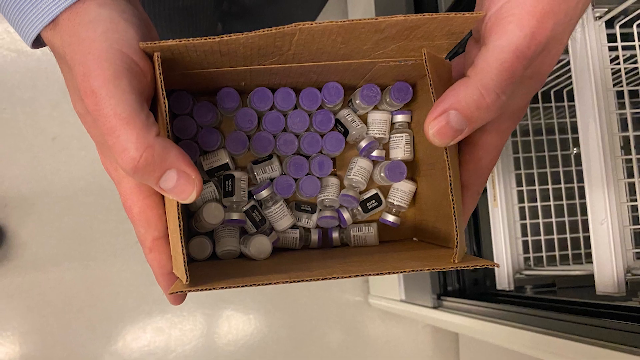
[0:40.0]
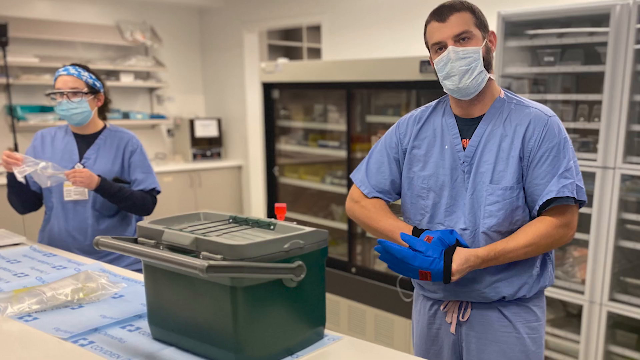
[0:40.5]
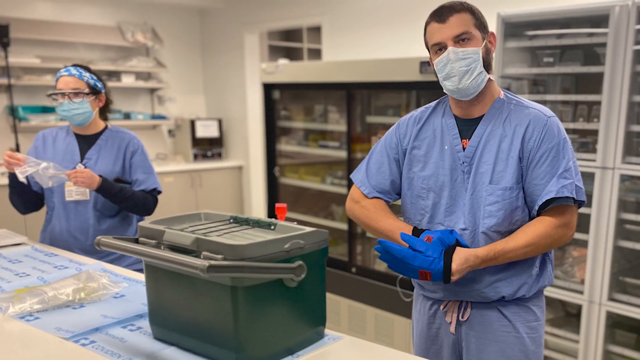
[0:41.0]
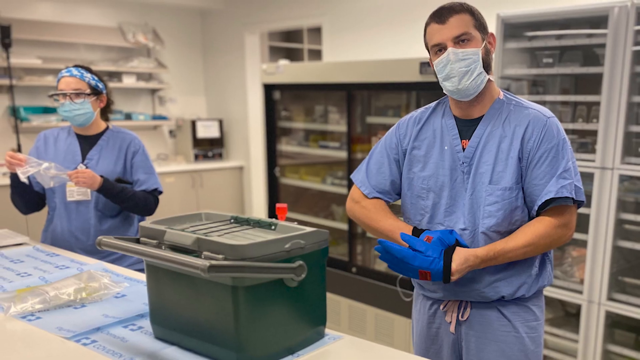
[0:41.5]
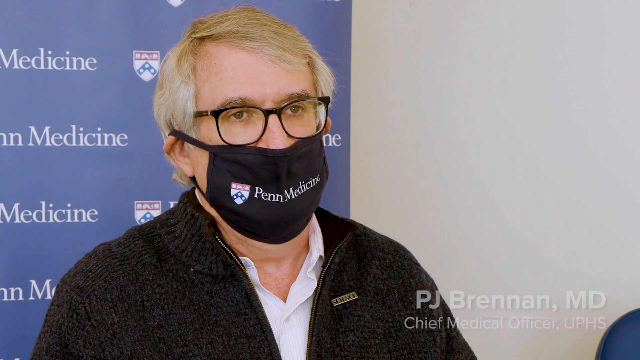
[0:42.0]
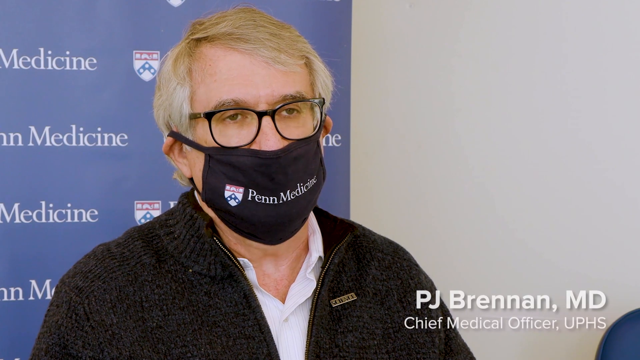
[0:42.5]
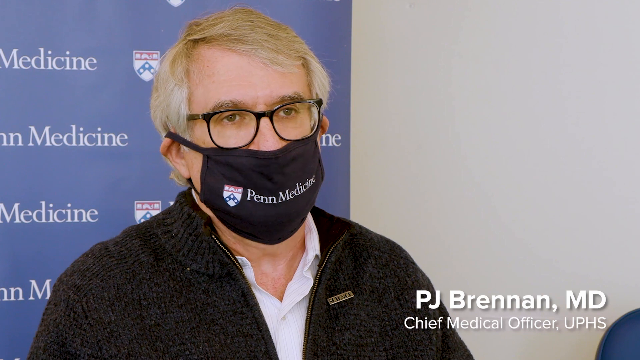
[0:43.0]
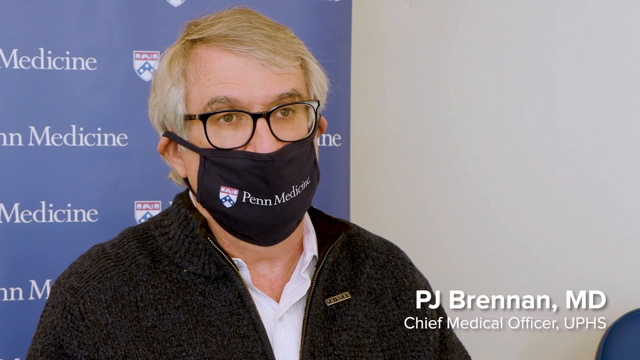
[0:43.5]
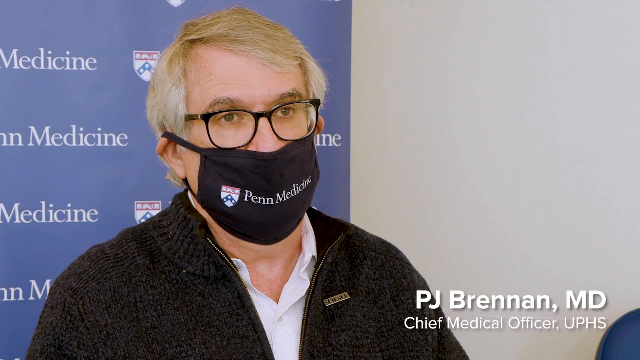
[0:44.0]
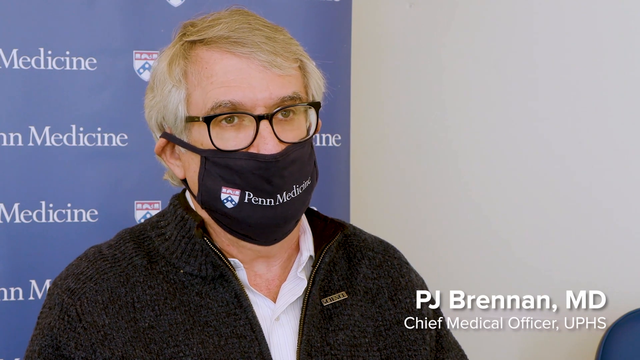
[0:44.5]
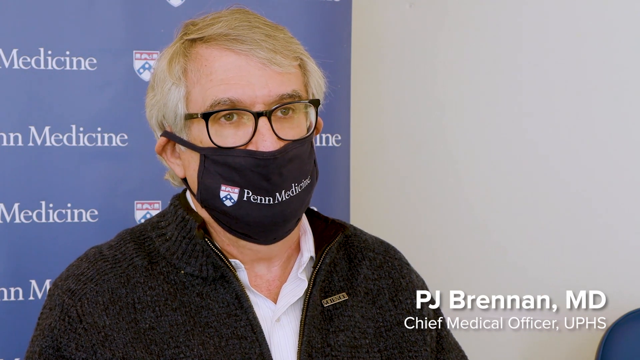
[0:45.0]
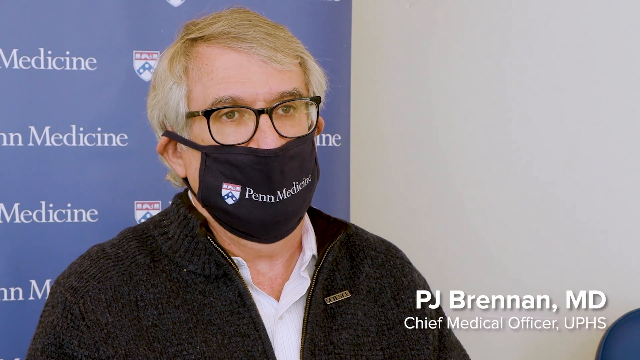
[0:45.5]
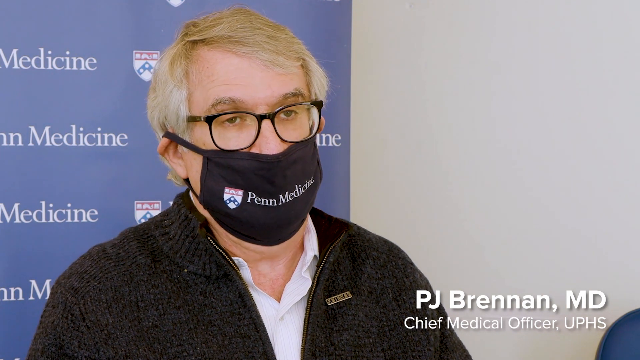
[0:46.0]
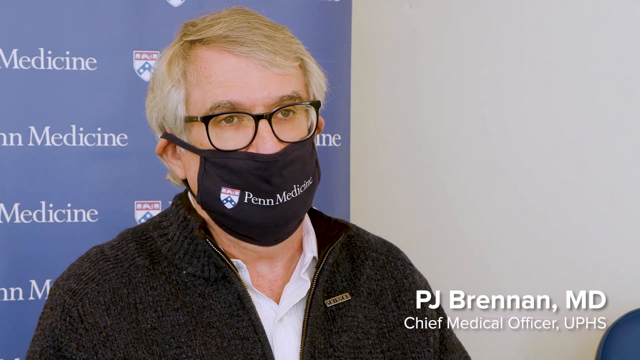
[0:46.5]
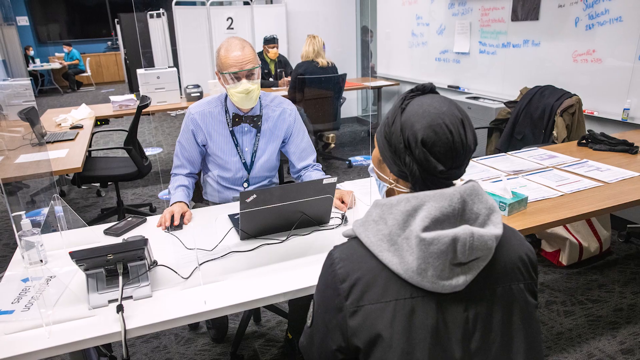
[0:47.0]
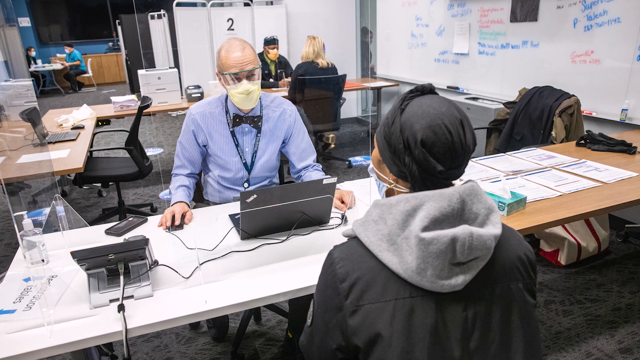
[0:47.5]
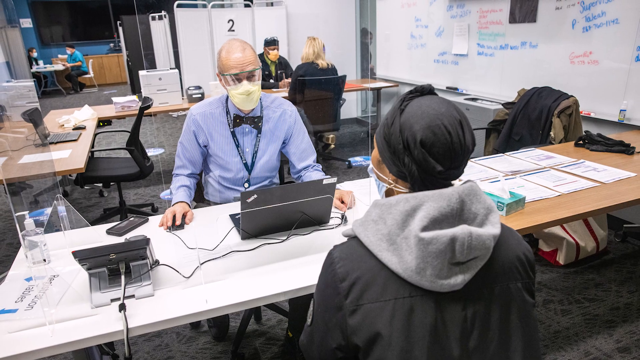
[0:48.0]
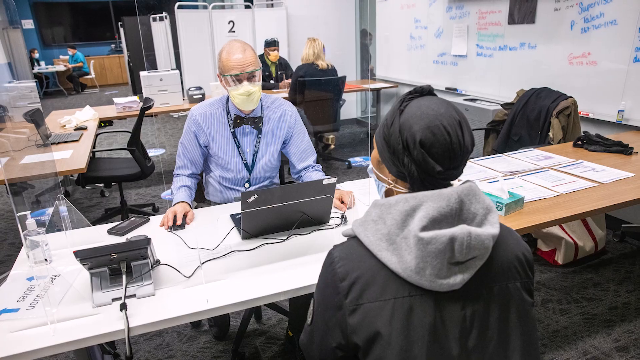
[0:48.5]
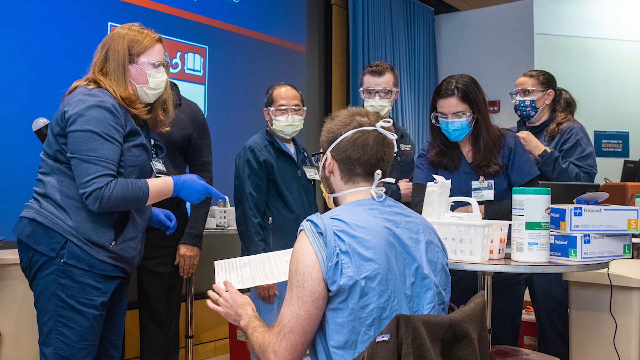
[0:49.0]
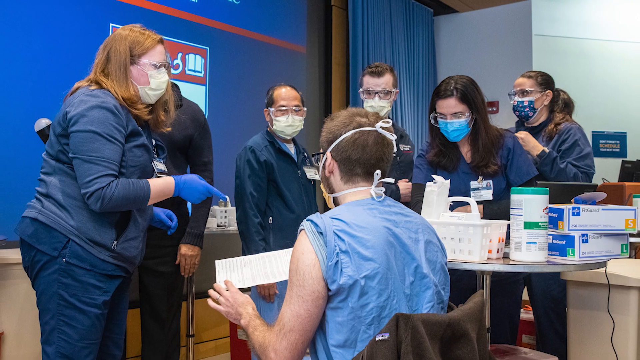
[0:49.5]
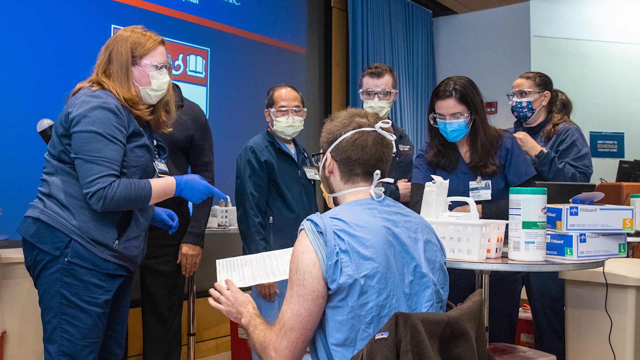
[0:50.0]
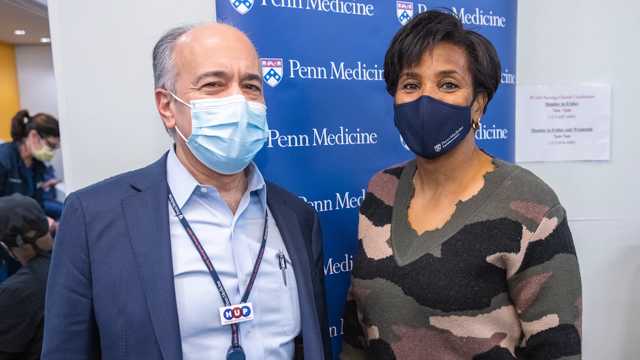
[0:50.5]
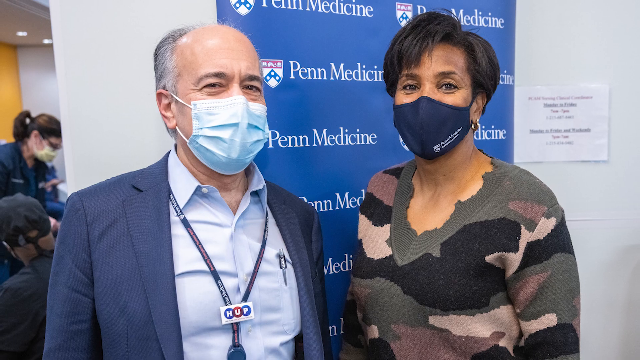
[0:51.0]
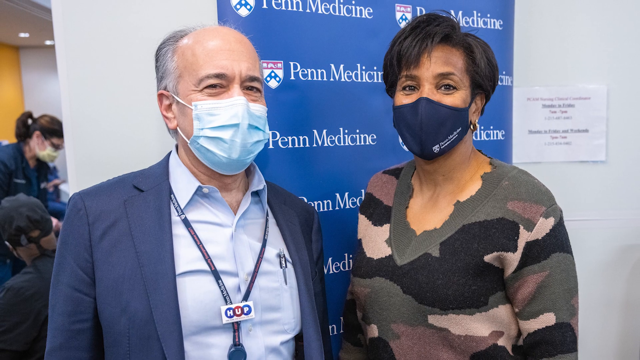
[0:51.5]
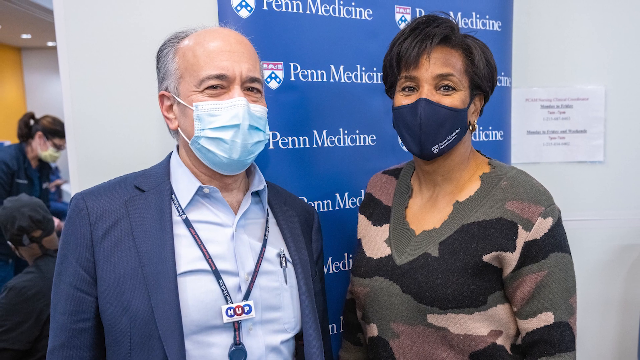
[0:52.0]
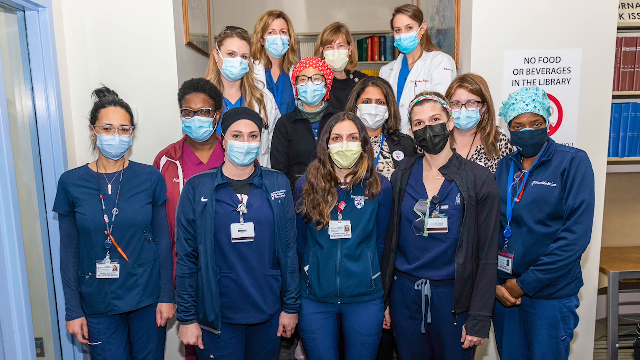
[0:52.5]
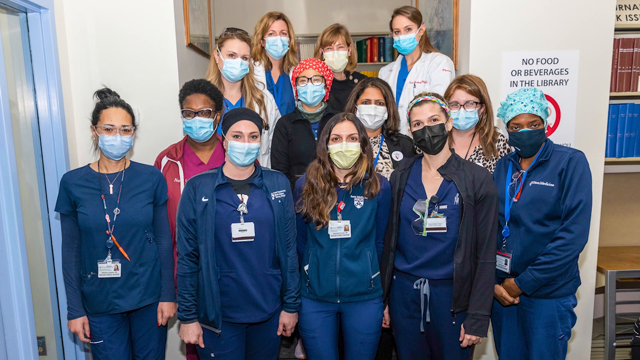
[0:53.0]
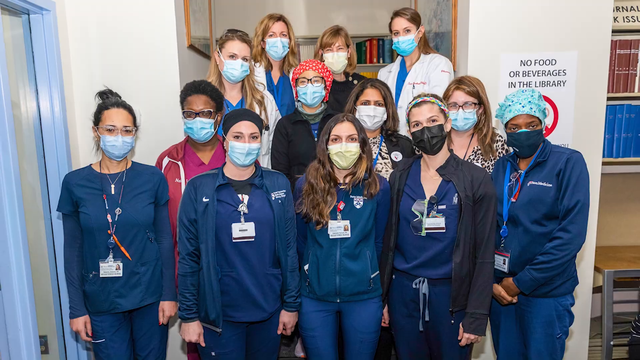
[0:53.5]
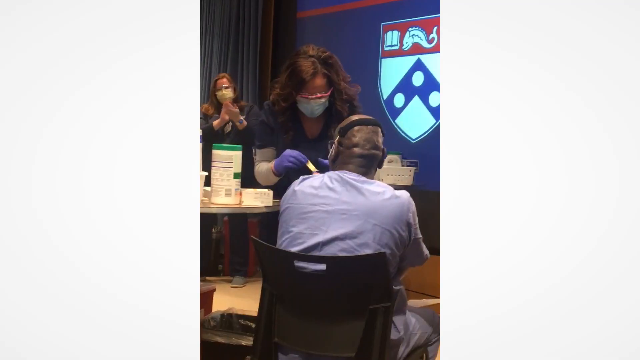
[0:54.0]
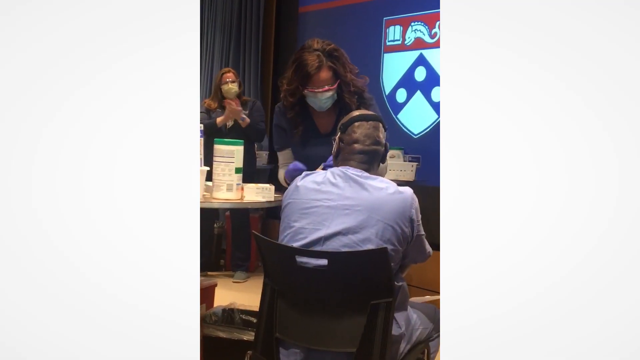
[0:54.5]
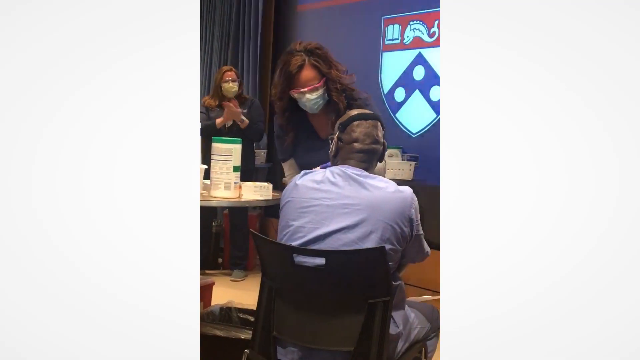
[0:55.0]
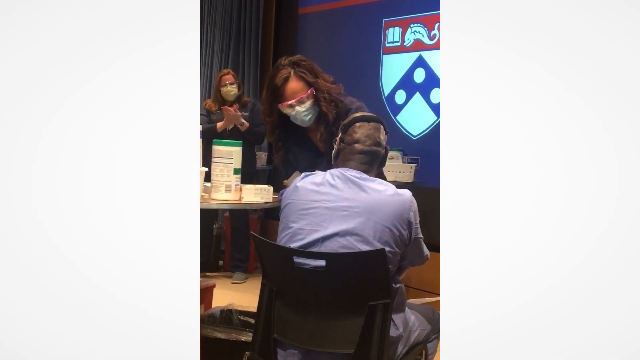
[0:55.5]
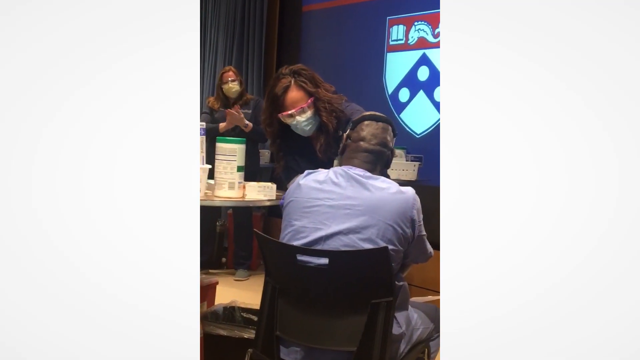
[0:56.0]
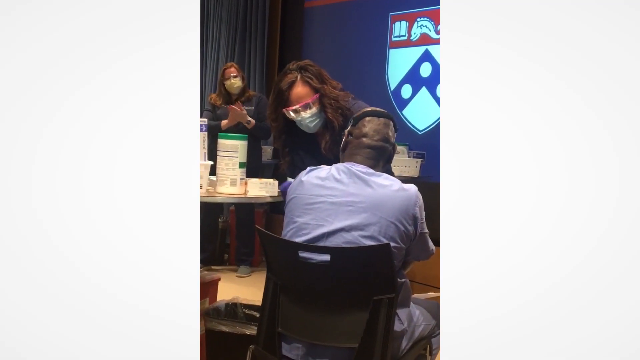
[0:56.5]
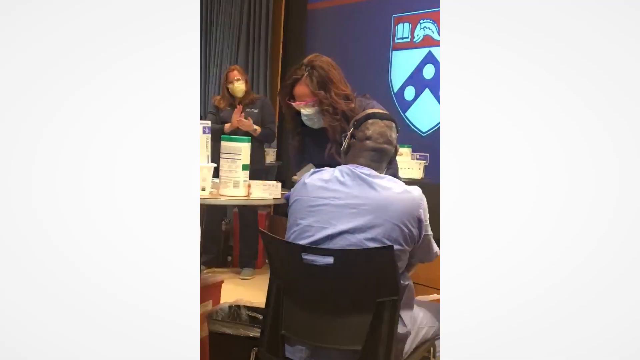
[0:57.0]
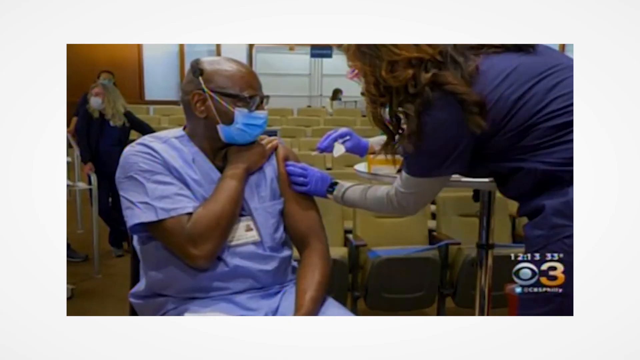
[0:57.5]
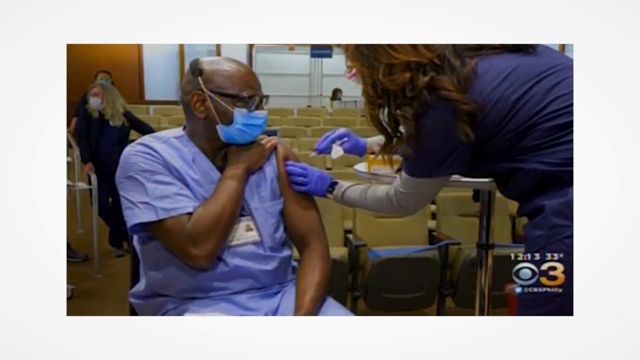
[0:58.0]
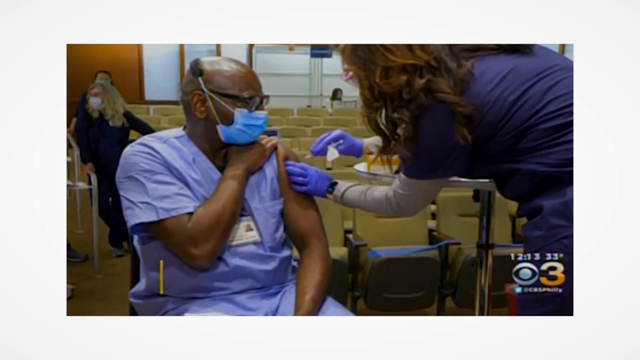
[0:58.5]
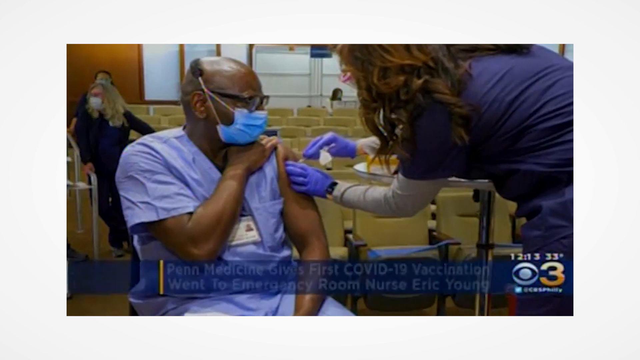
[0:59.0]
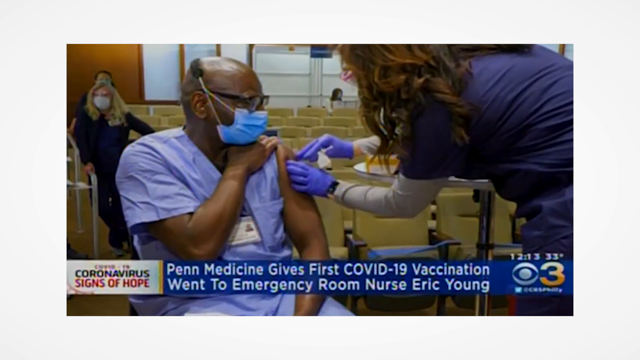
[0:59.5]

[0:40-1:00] A close-up shows a box holding about 100 vials of vaccine, held on either side by a man, with the top open and the camera looking down at the vials from above. The scene cuts to a still image of what appears to be a lab, where two technicians in blue overalls seem to be holding court. Next is PJ Brennan, MD, being interviewed in a head-and-shoulders shot. He has whitish-blondish hair, wears dark glasses and a Penn Medicine mask, and stands in front of a Penn Medicine board. Several still photographs of people being vaccinated follow: a patient sits while a series of workers scurry around administering his vaccine. Three or four such pictures flash on screen very quickly. The video returns to moving footage of another vaccination at Penn Hospital, with the same brand emblem visible just behind the woman giving the injection. A man sits in a chair with only his back visible. The woman leans forward in the classic injection posture, puts the needle into his arm, pulls it out, and swabs the spot with a wipe.